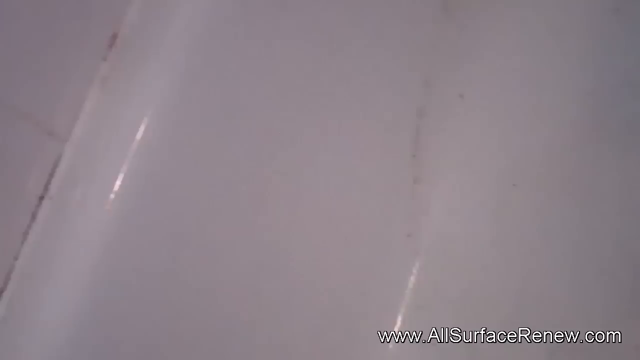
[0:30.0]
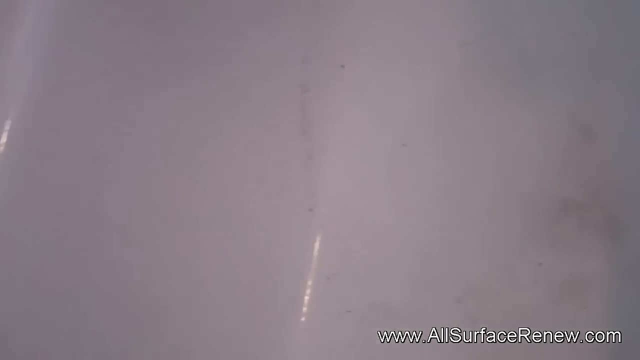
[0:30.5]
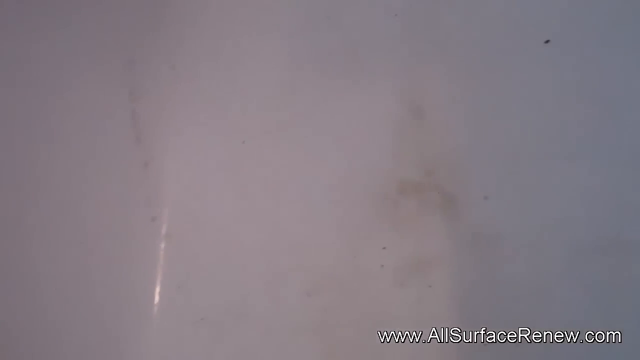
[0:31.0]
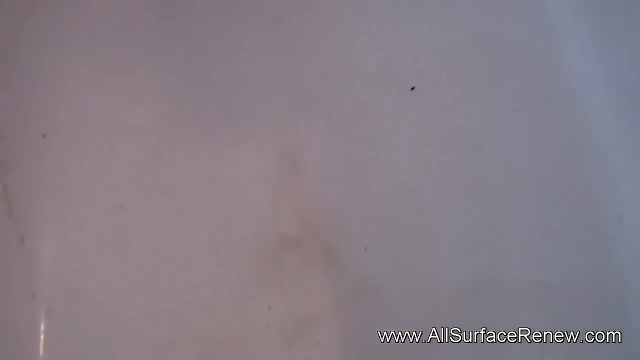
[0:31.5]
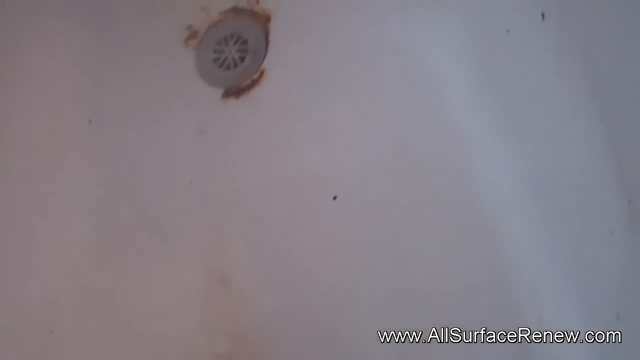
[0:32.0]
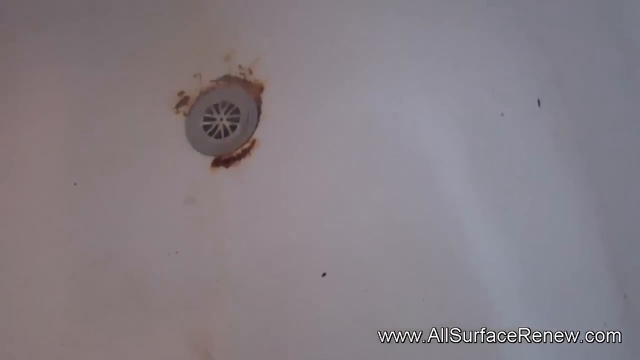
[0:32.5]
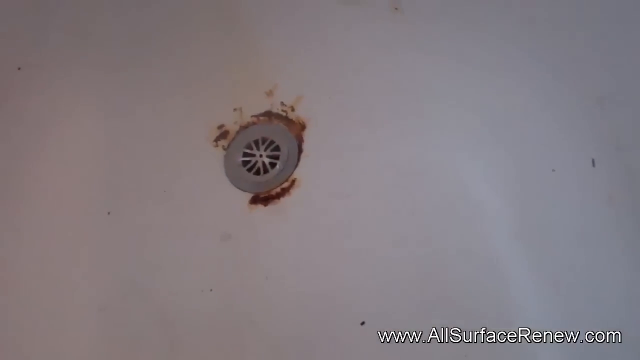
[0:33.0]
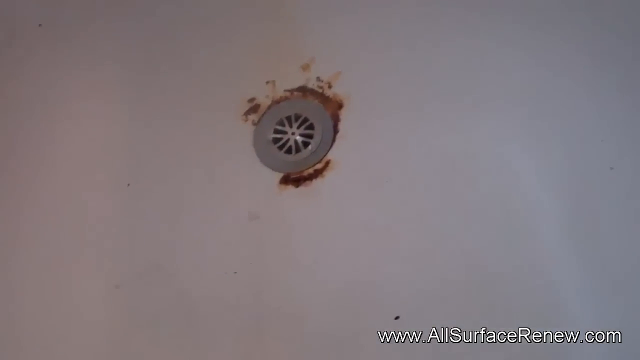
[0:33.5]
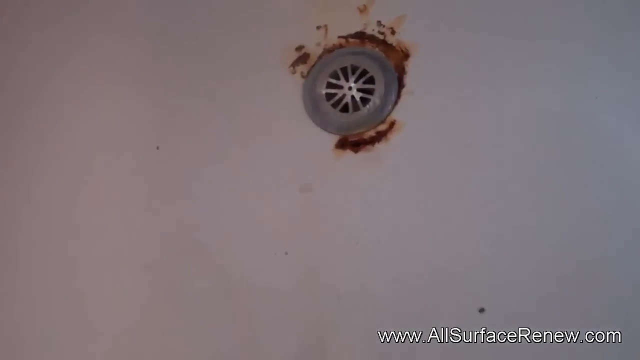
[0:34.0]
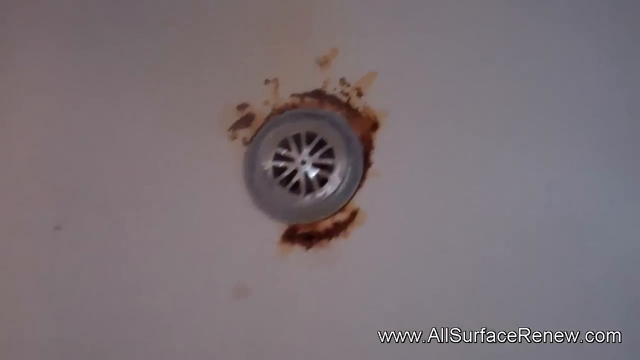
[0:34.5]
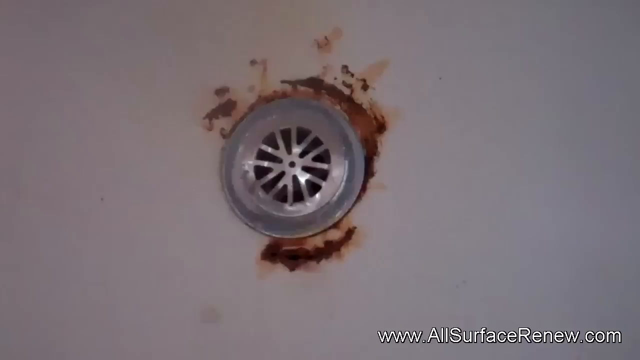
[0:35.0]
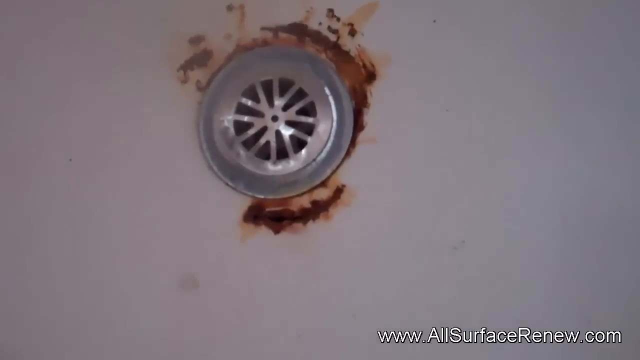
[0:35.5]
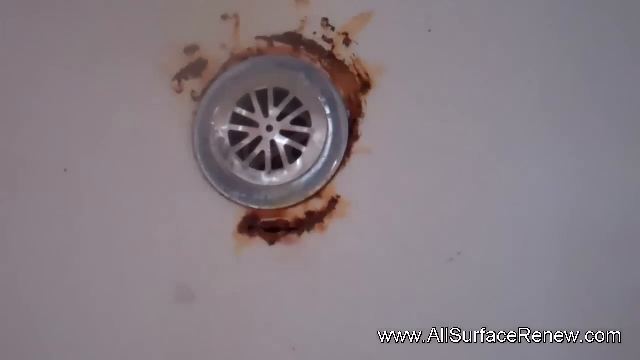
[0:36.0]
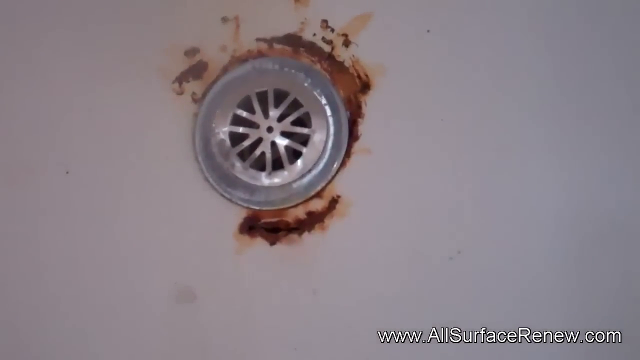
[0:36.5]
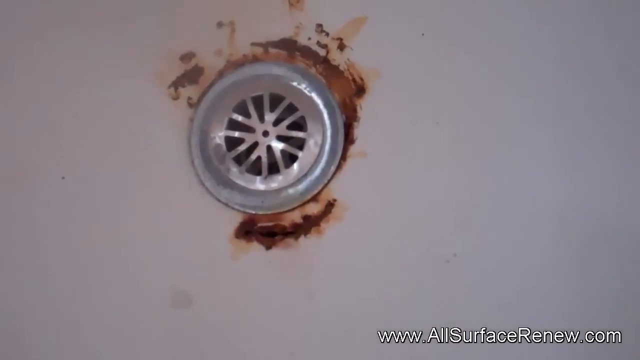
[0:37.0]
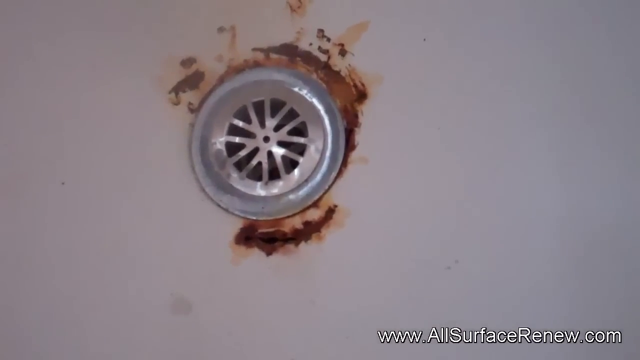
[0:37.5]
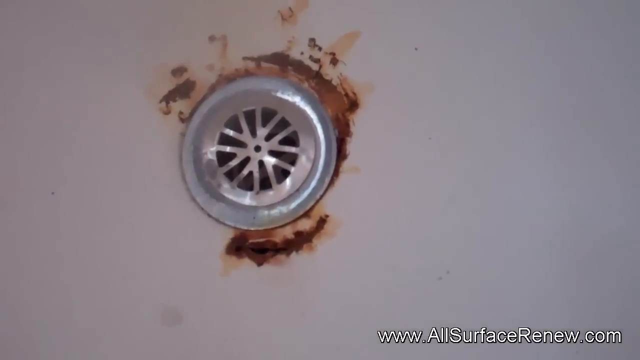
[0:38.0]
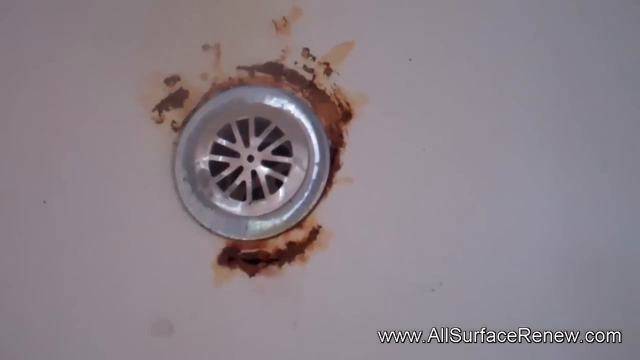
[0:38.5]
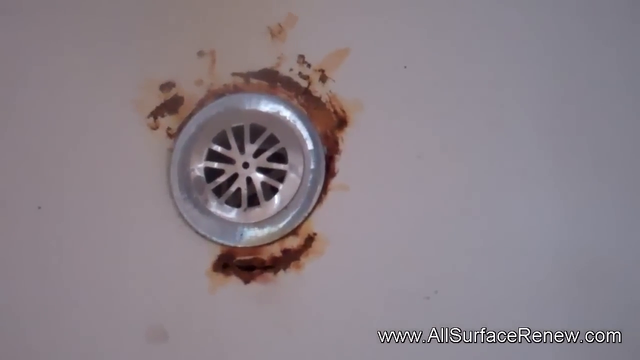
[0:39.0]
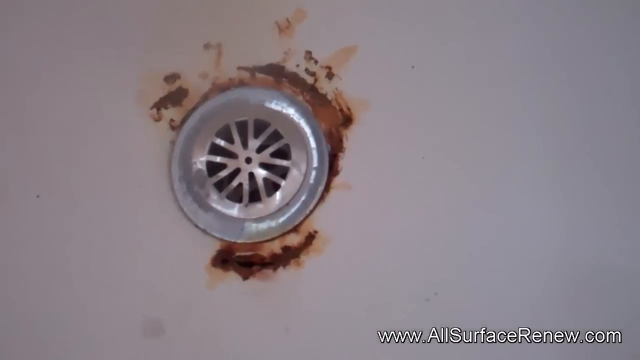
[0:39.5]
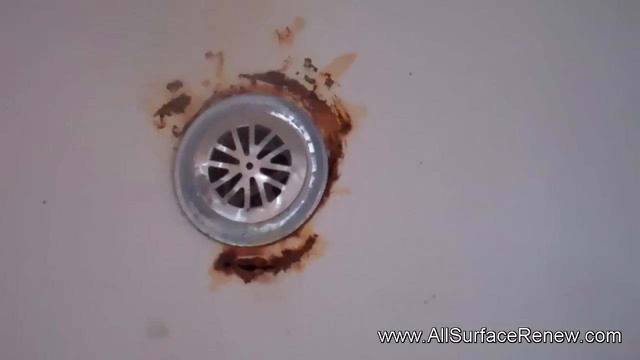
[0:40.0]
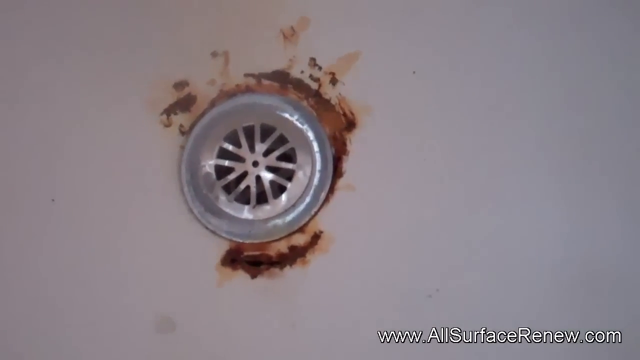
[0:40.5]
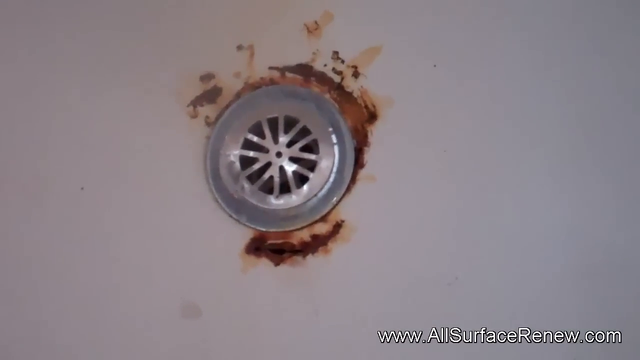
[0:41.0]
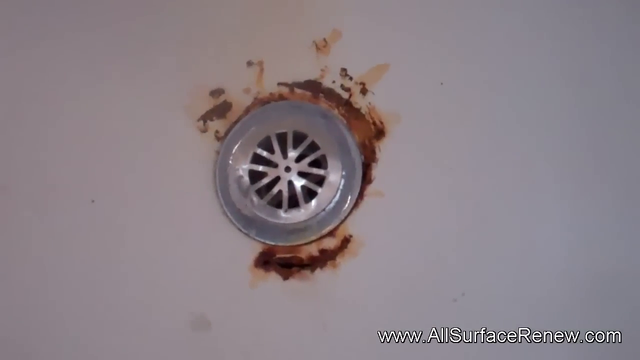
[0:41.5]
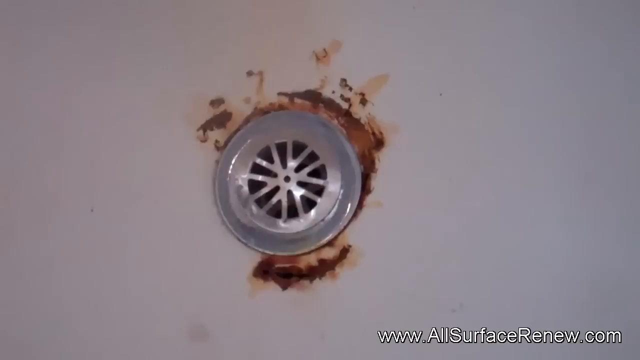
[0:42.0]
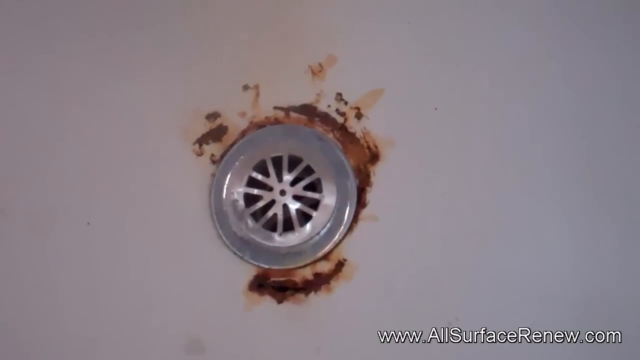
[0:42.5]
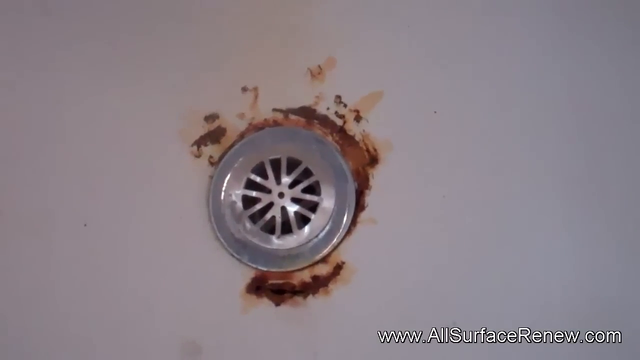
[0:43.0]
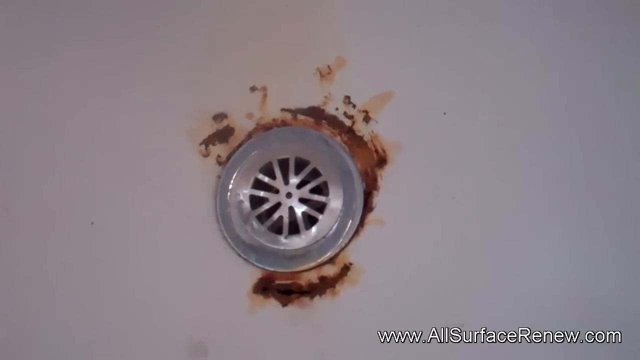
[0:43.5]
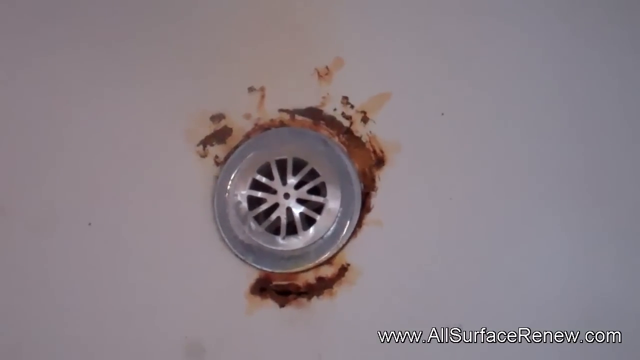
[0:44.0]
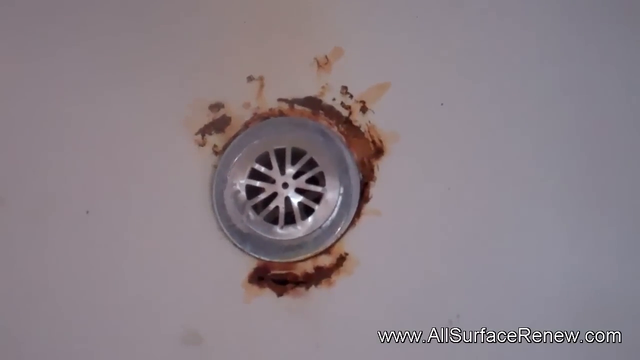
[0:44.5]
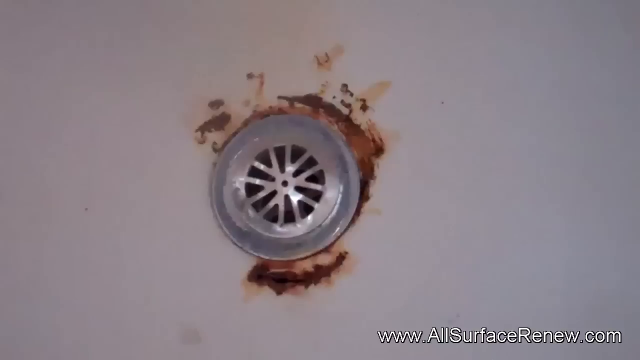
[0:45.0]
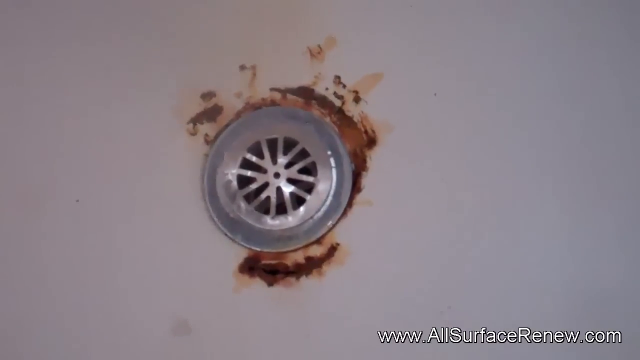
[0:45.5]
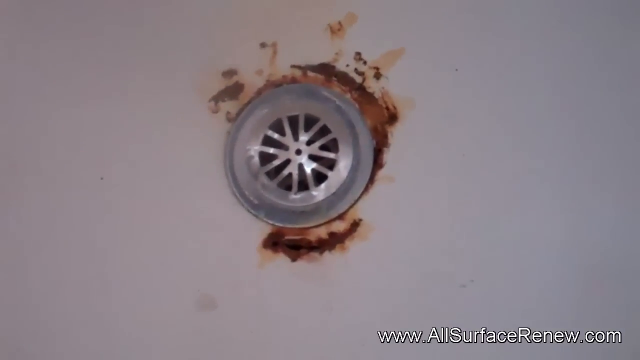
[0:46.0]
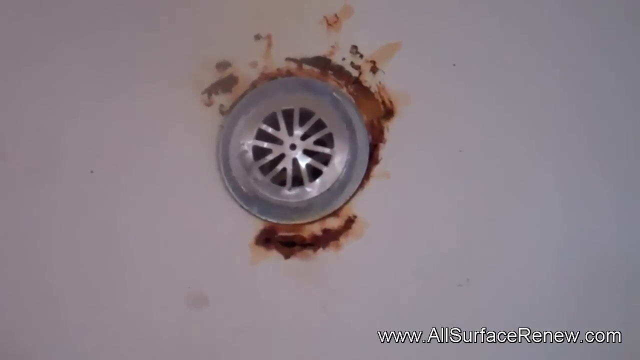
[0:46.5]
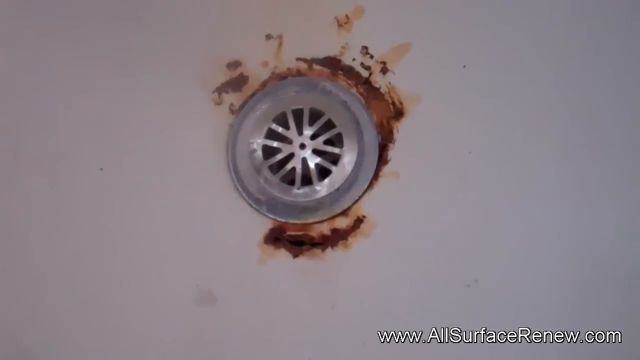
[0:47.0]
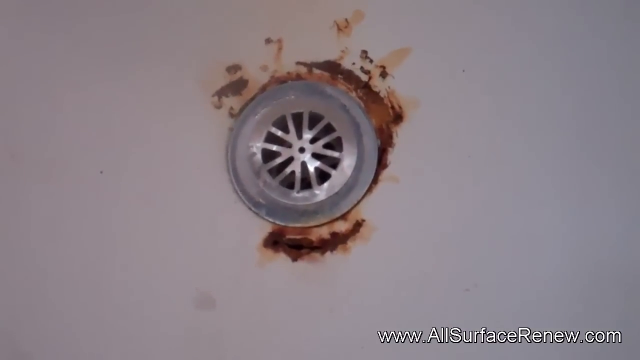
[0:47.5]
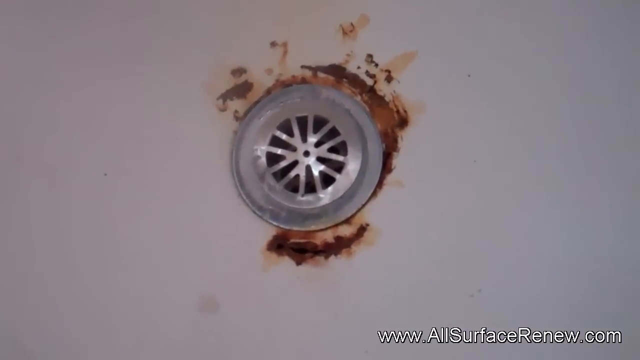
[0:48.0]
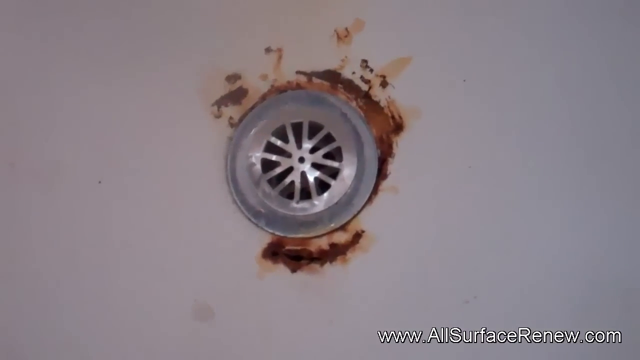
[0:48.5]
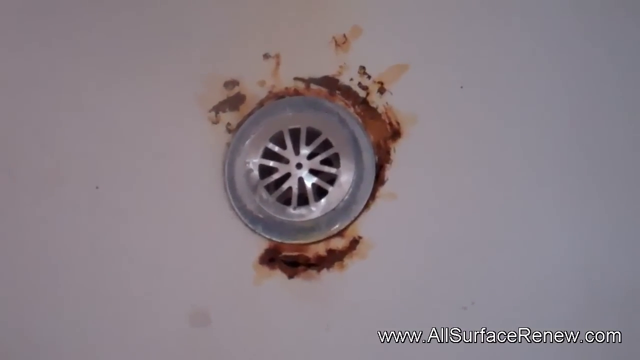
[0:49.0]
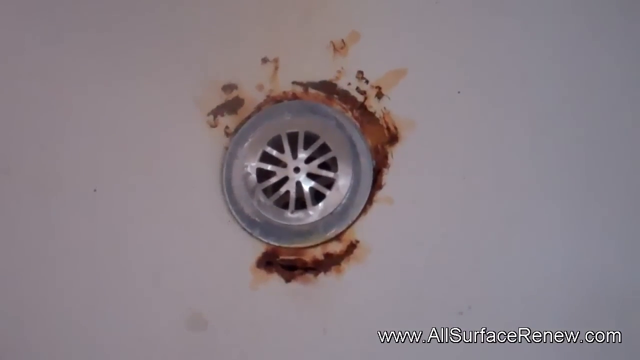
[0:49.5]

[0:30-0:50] The camera pans across the bathtub, showing that it is not really rusted anywhere except around the drain area, which has a considerable amount of rust. The drain cover itself is not rusty; the rust is on the tub surrounding the drain cover. The rest of the bathtub appears to be in pretty good condition. The man keeps the camera facing the rusted area, holding his phone or camera by hand; it does not appear to be mounted anywhere, as the image is still pretty shaky. Nothing else happens besides looking at the rusted area.